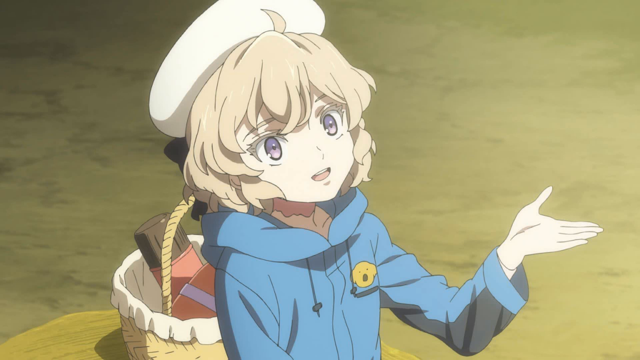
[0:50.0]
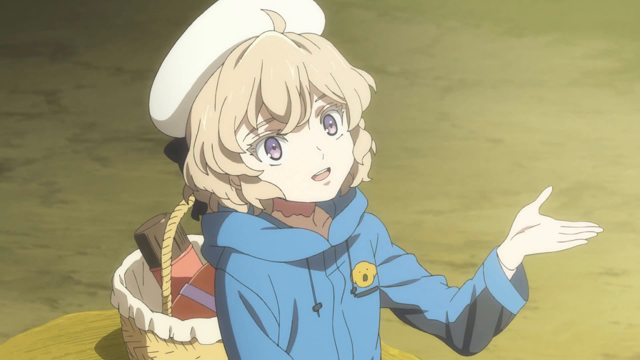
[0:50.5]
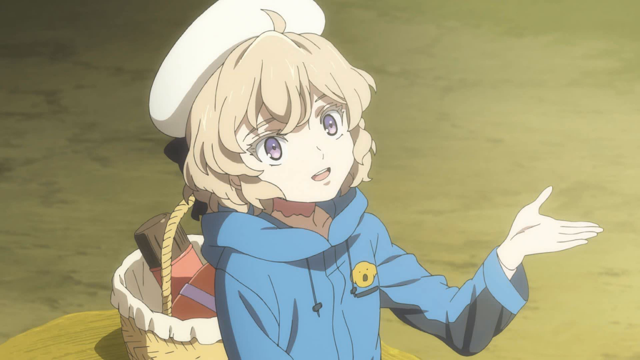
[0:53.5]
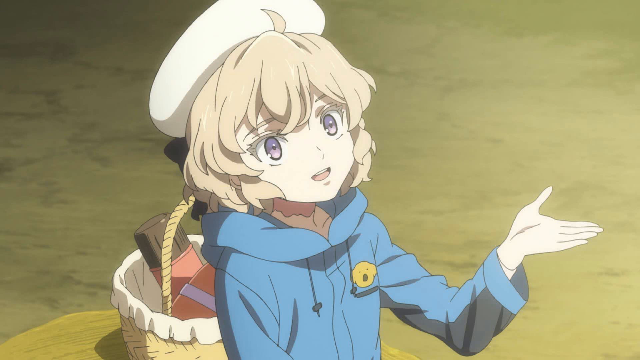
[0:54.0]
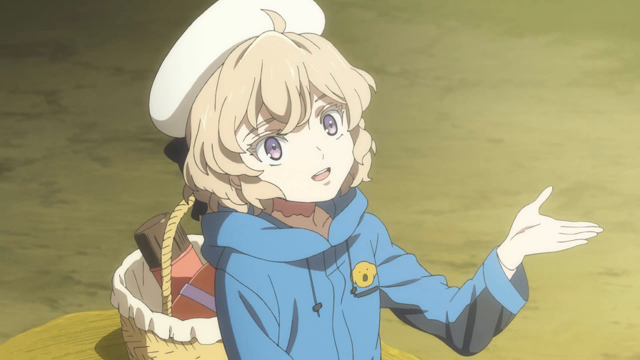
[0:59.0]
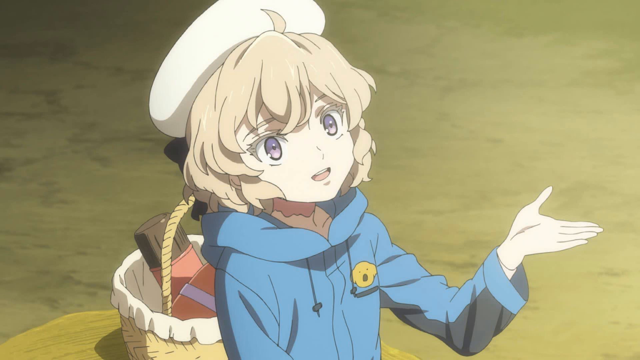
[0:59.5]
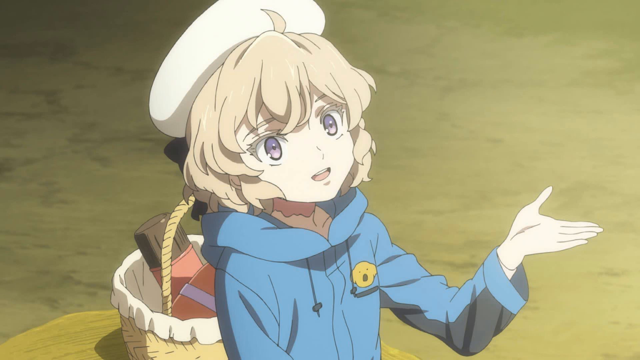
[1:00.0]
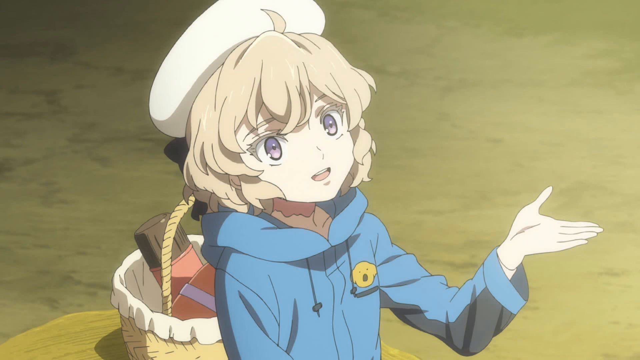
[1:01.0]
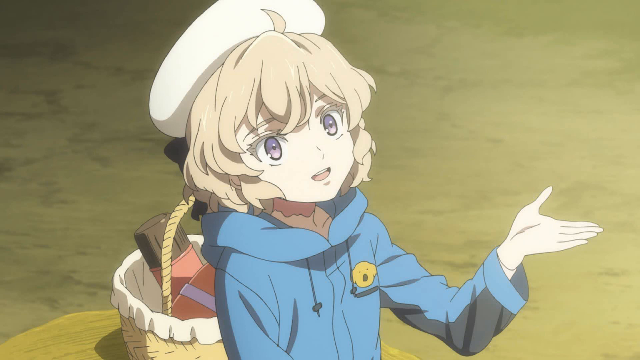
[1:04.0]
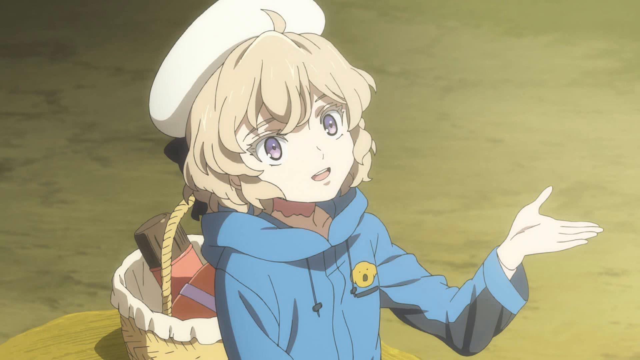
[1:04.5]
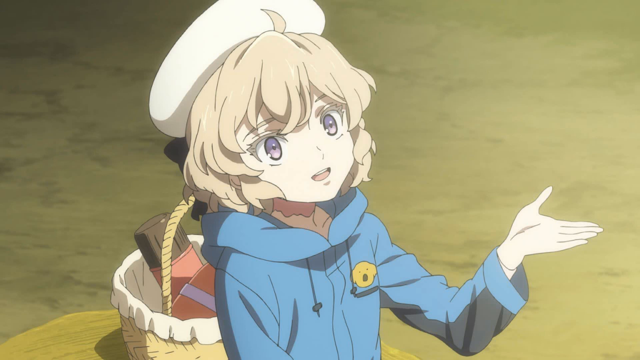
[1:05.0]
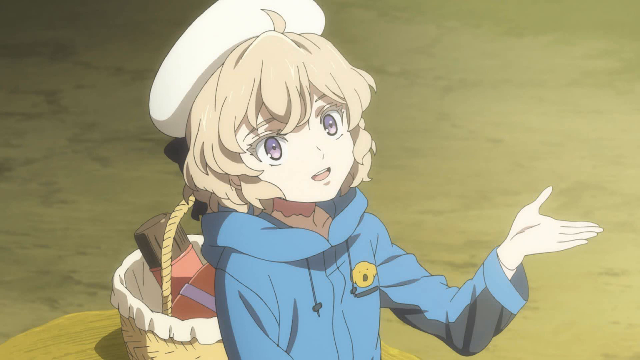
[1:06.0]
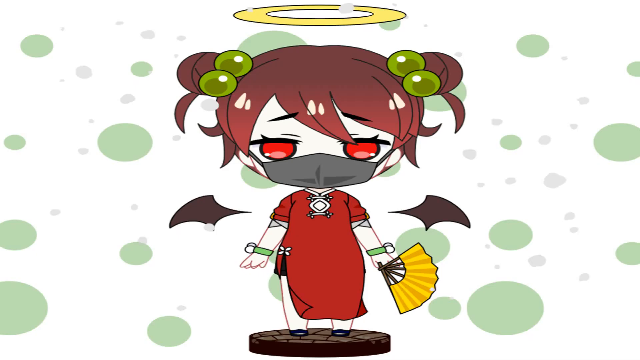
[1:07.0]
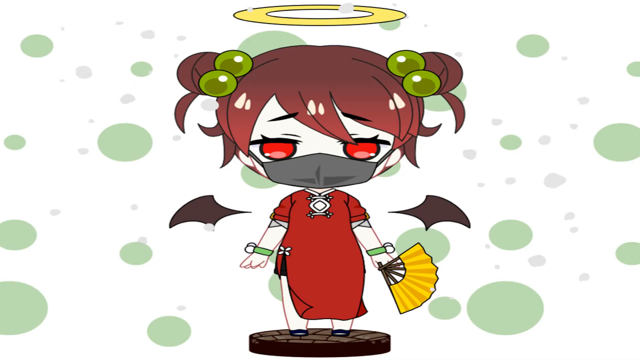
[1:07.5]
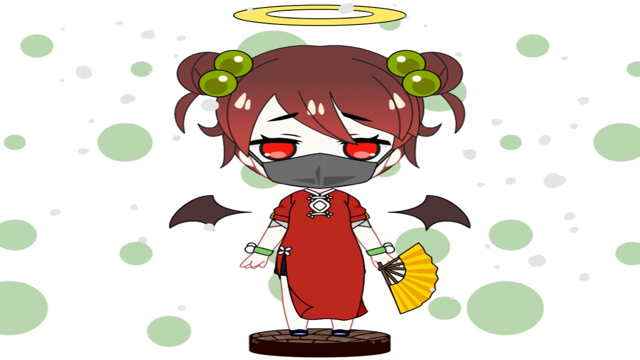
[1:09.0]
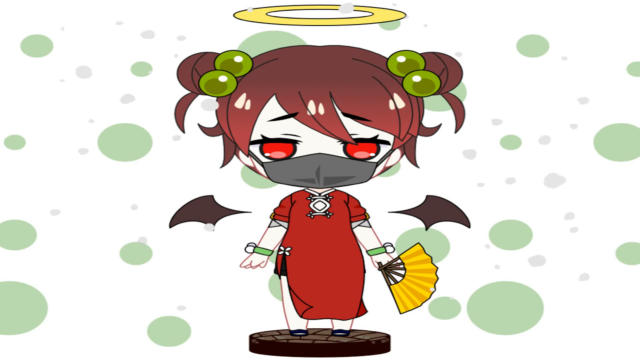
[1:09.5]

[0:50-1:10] In a scene from a Japanese animation, a girl, probably in her teens, has blonde hair, big blue eyes and a very pale skin tone. She wears a purple sweater with a koala logo. What looks like a backpack actually looks like a wooden, straw-like basket behind her, holding what seems to be a long water bottle and perhaps a board or a piece of bread. She holds up her hand as if talking to someone of taller stature in front of her. A different girl is then shown in full, from head to toe. She has red hair in three buns tied to the side with ball-shaped hair ties, a yellow halo on top of her head, red eyes and very pale skin, and she wears a mask. She wears a red traditional Chinese one-piece, holds a yellow fan and has two bracelets. Behind her are two black devil-like wings. The background is completely white with some green balls.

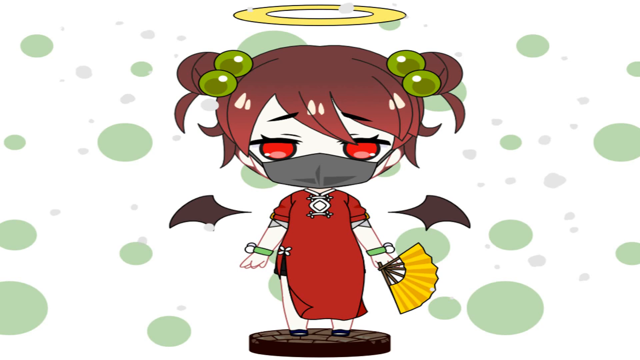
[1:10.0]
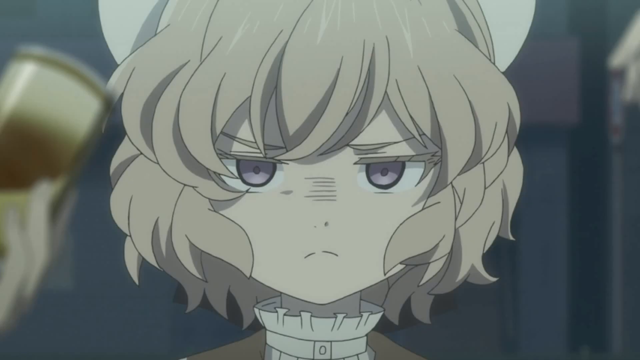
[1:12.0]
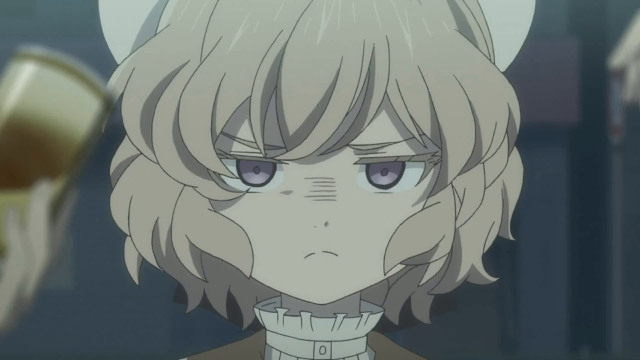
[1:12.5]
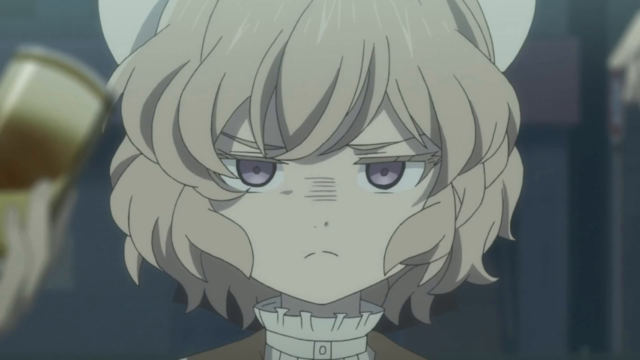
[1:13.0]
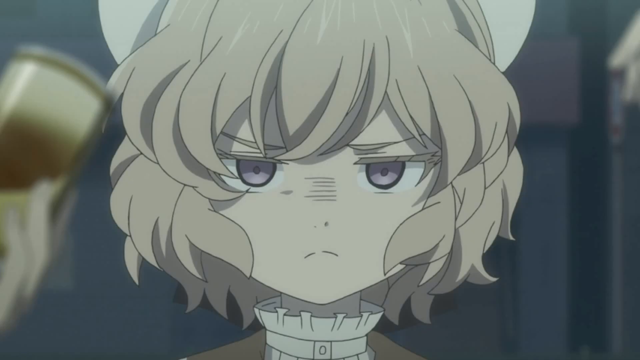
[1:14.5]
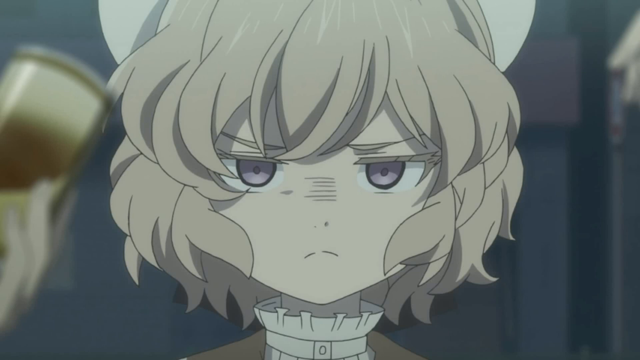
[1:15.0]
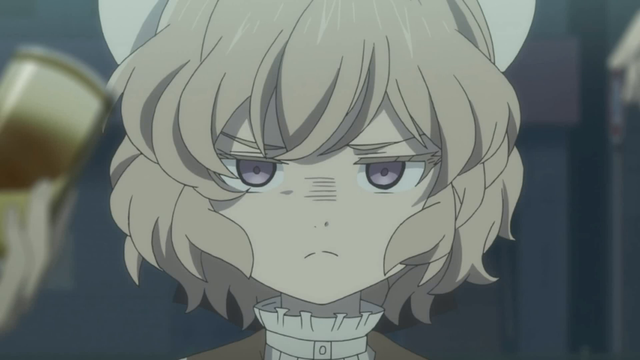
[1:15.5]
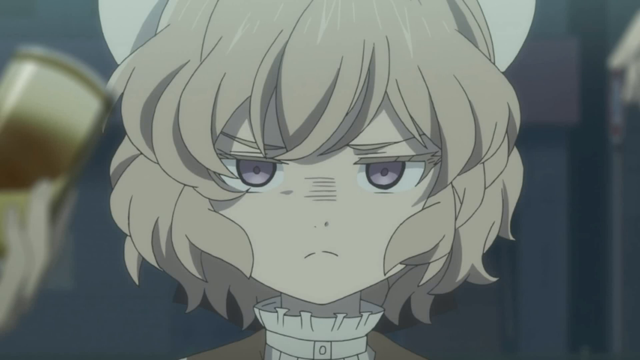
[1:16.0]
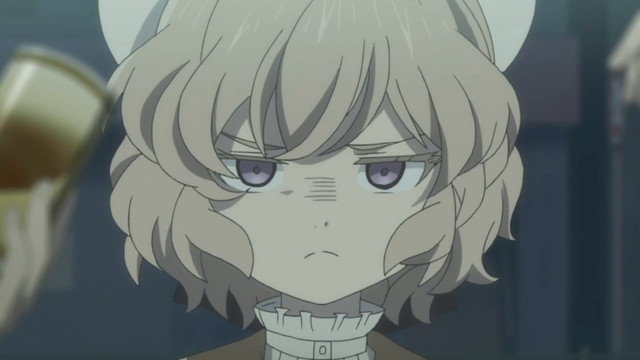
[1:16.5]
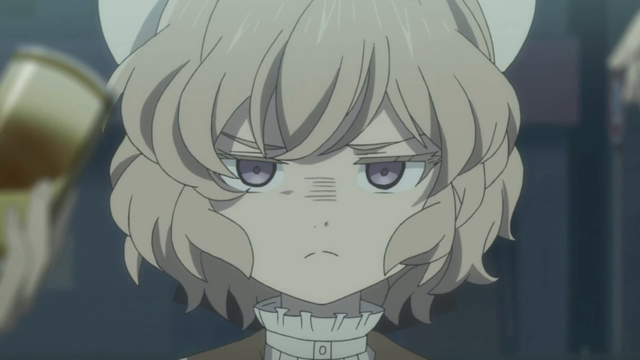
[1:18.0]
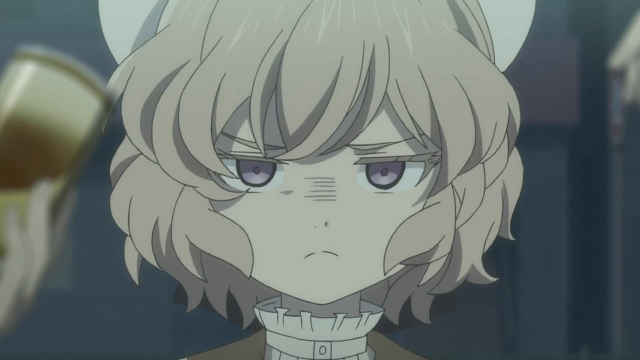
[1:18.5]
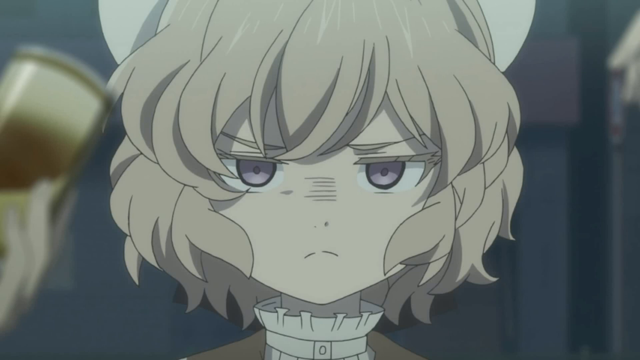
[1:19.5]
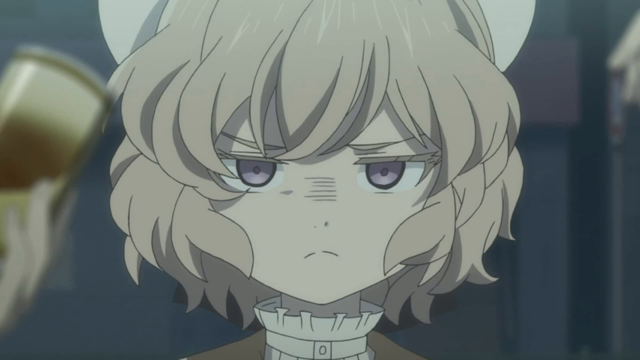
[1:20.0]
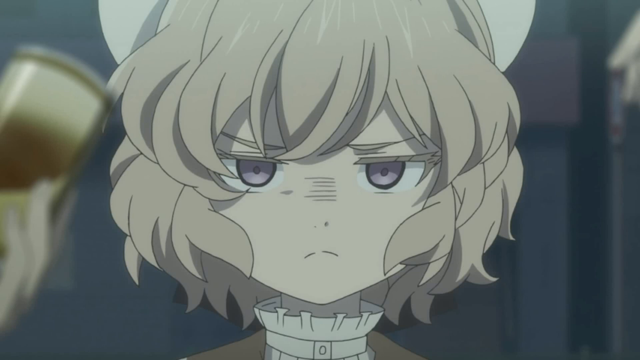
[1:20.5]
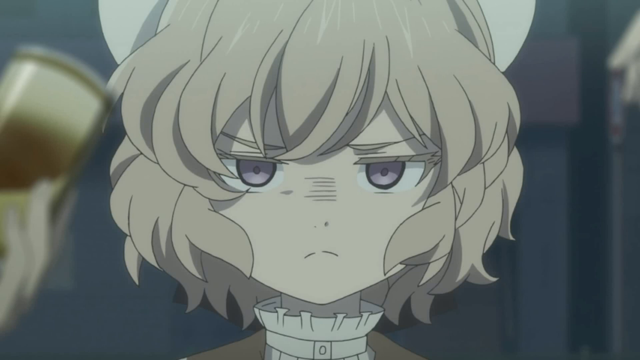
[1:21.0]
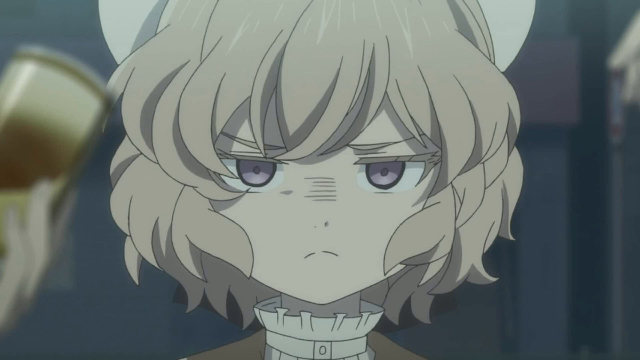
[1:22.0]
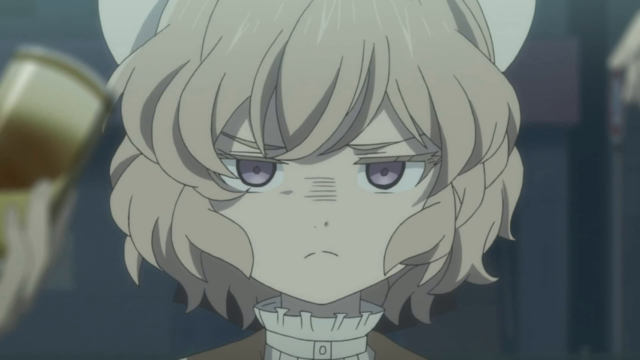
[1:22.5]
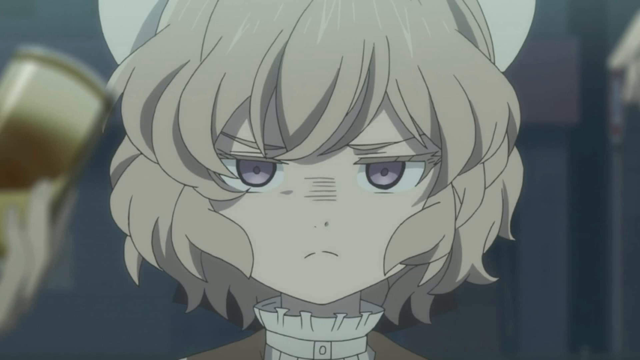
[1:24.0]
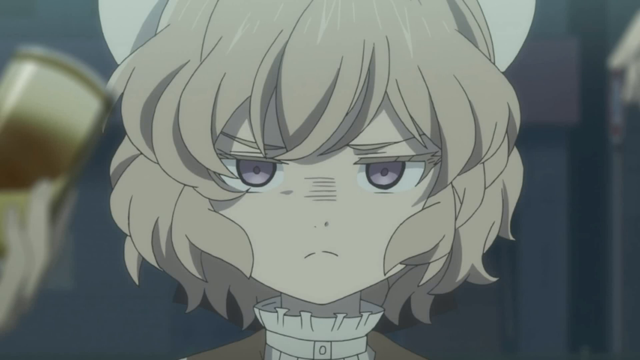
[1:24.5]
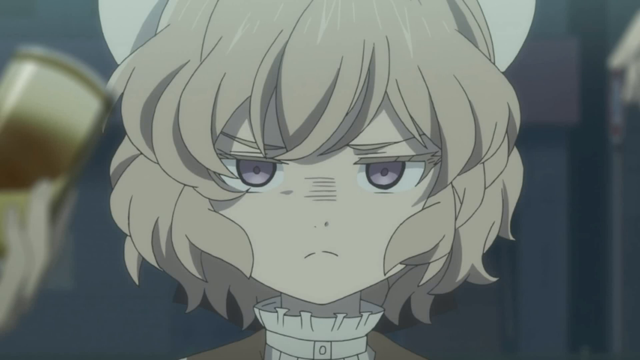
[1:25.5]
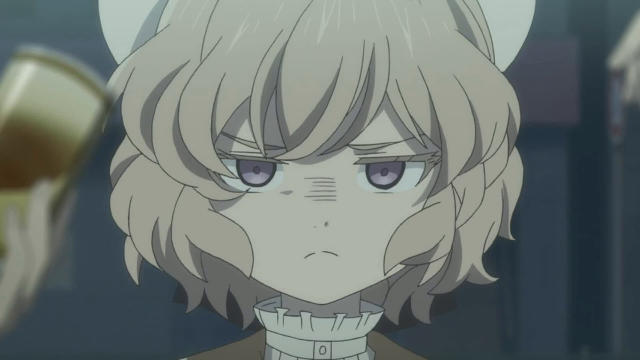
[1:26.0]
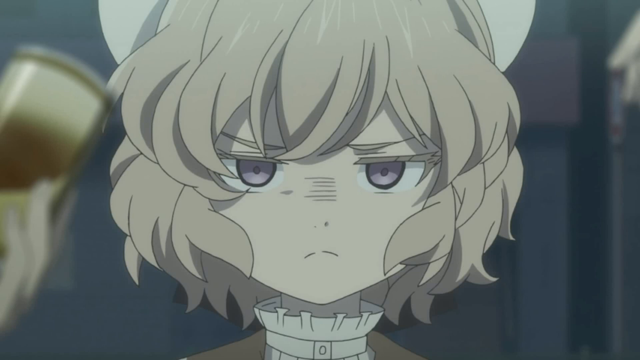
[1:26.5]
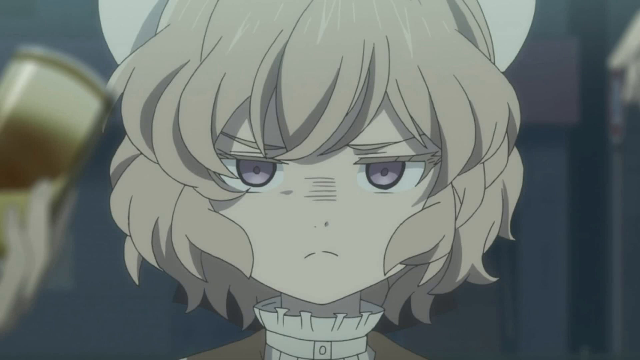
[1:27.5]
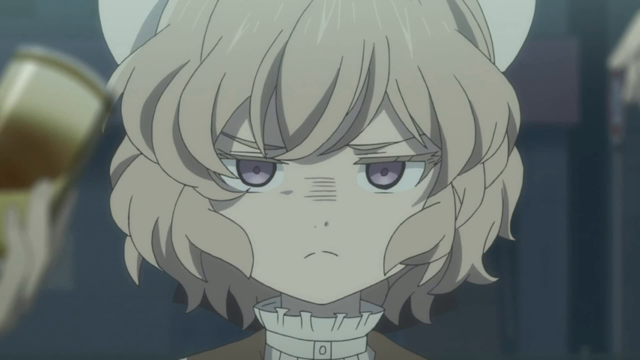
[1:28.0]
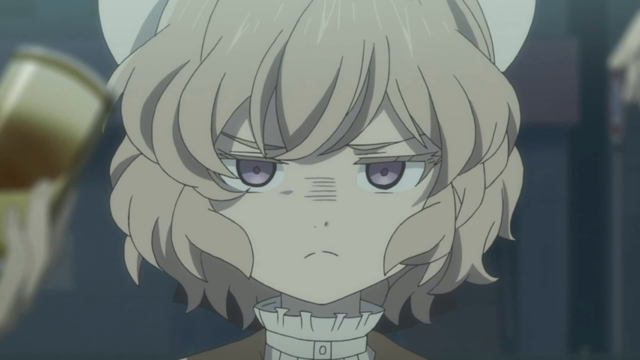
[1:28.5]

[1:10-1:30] A still image shows a girl drawn as a cartoon anime character. She has very pale skin, red eyes and red hair, and she wears a mask. She looks young, maybe in her 20s. A set of four red ball hair ties ties her two buns on the side. She wears a red one-piece dress and holds a yellow pen. She has two devil wings beside her and a big yellow halo ring above her head. The background is white with some green balls, and she is standing on a brown plate. In the next scene, another girl with short blonde hair and blue eyes seems very angry and unhappy. She has two buns on her head and wears a shirt with a white collar. Her eyebrows are stressed and her mouth is bent down; she looks upset and angry.